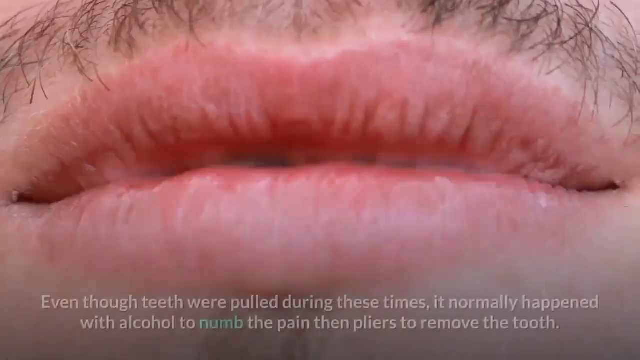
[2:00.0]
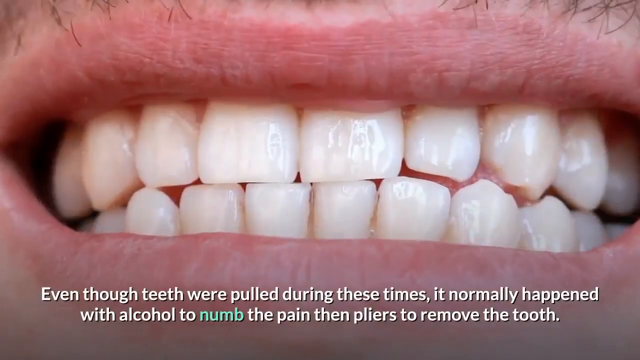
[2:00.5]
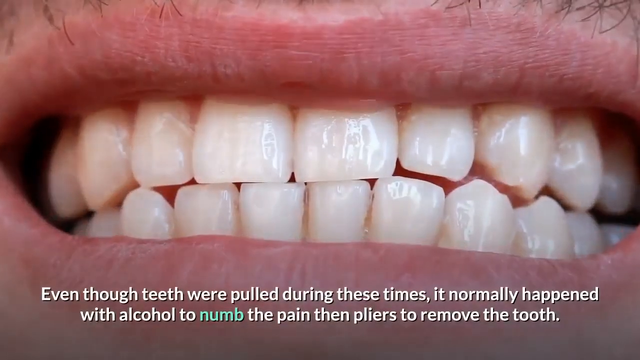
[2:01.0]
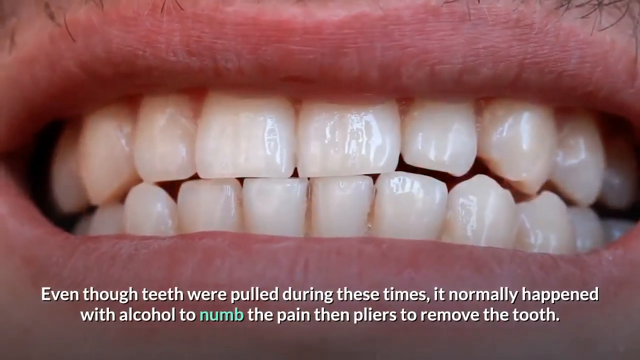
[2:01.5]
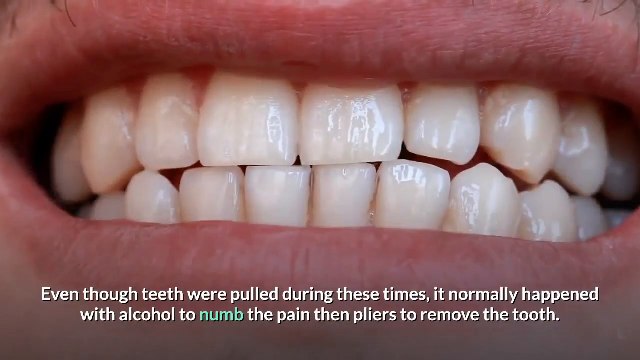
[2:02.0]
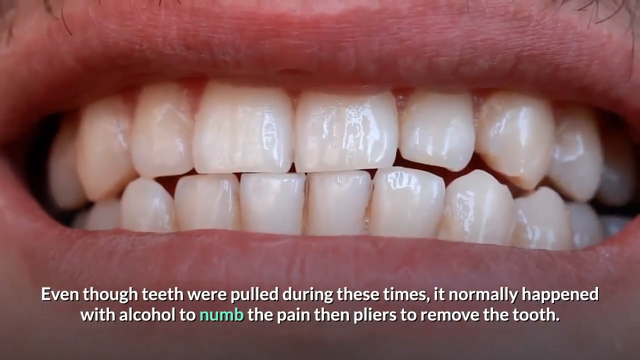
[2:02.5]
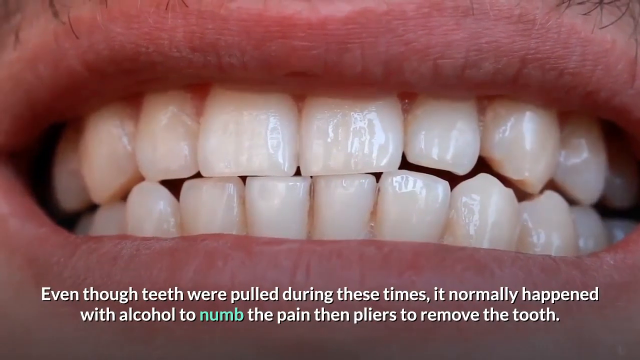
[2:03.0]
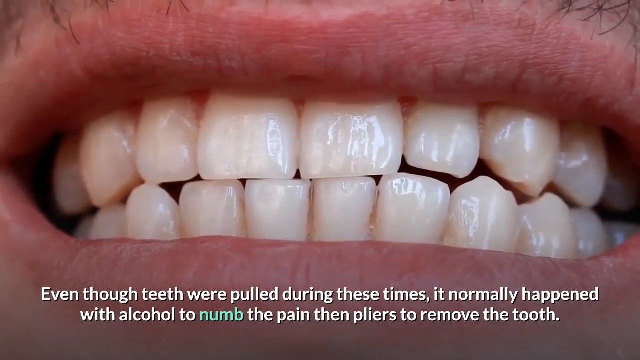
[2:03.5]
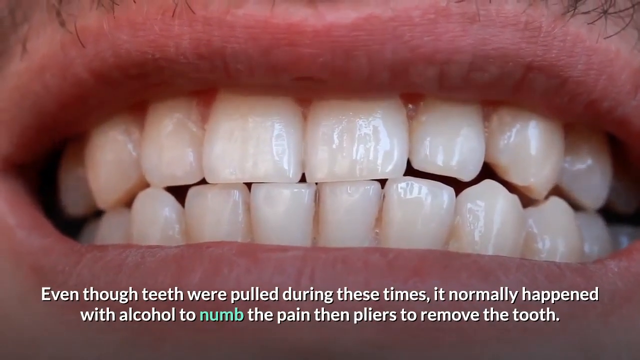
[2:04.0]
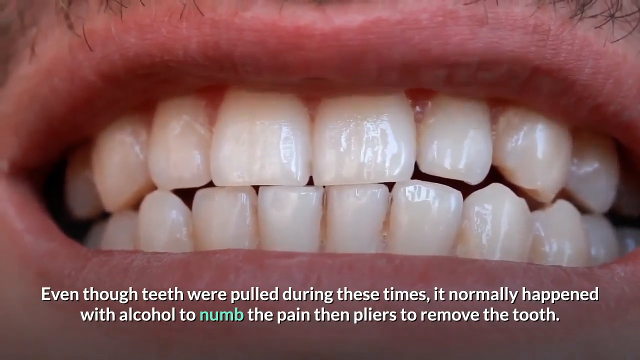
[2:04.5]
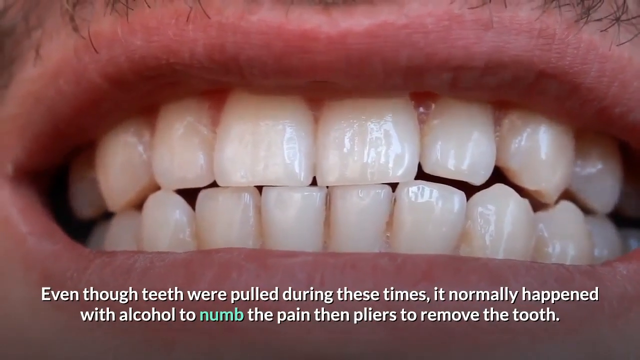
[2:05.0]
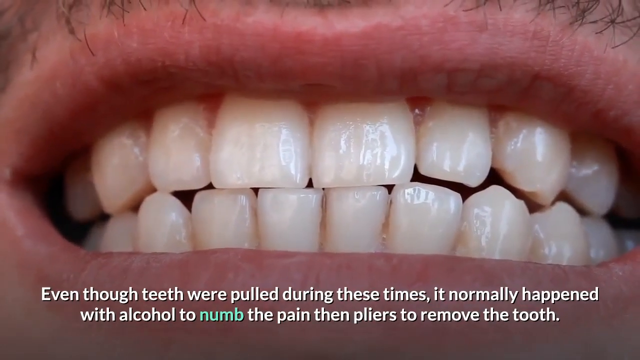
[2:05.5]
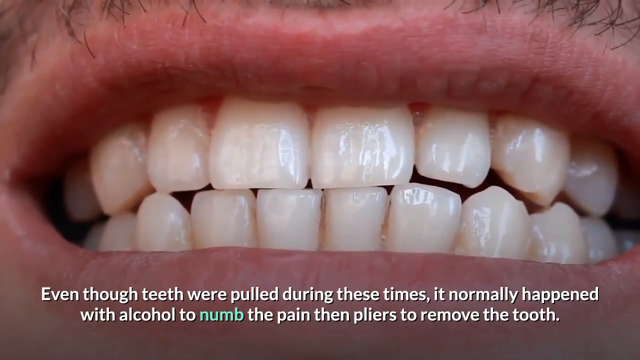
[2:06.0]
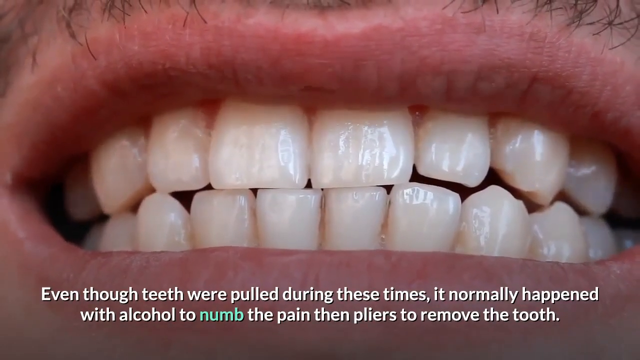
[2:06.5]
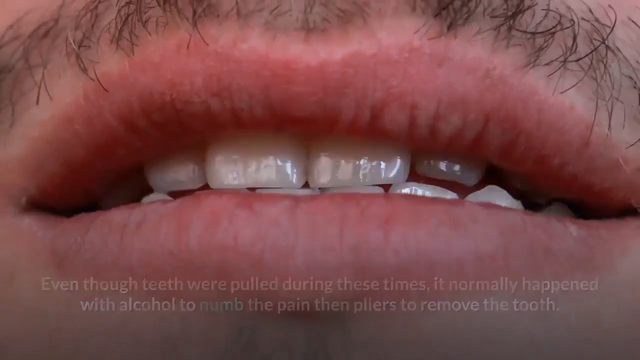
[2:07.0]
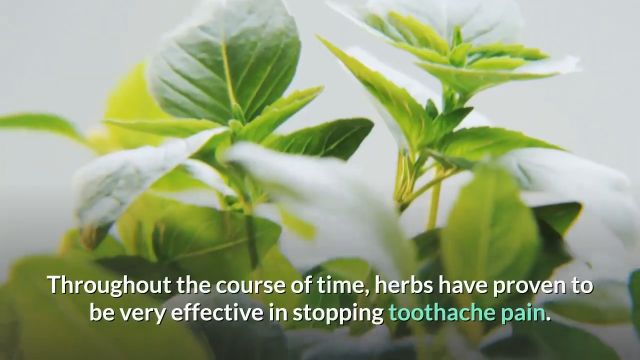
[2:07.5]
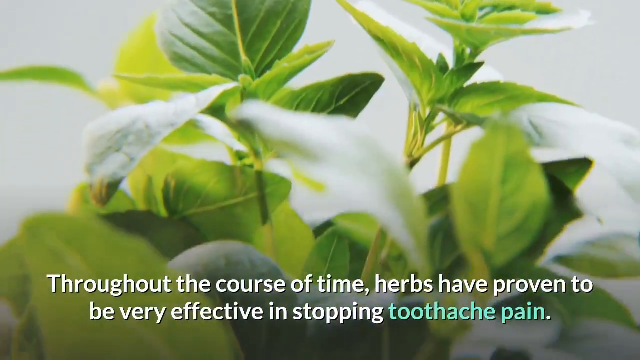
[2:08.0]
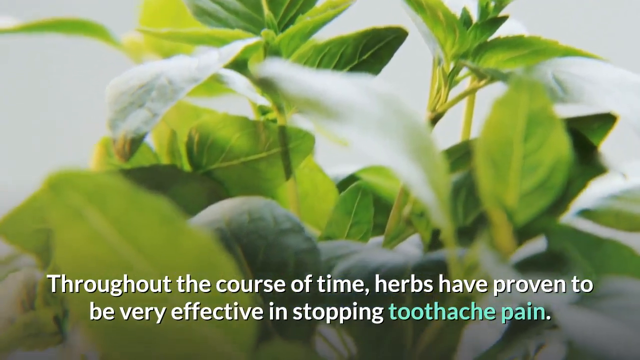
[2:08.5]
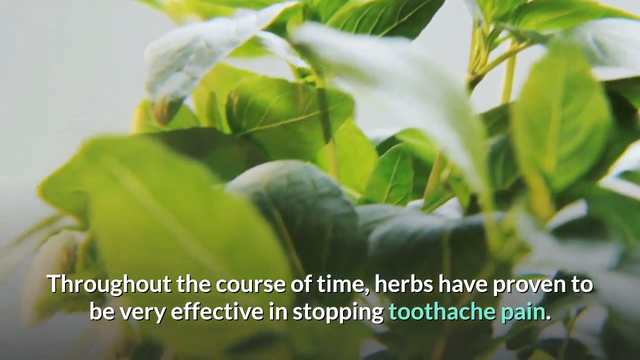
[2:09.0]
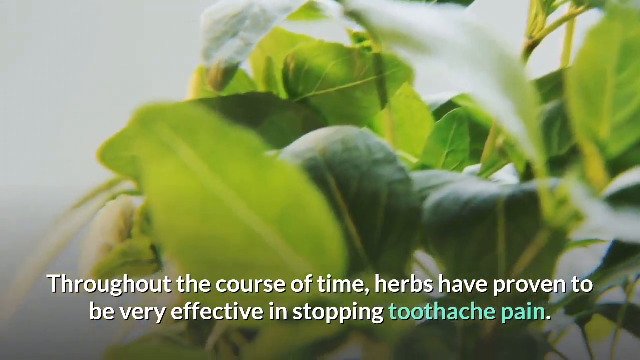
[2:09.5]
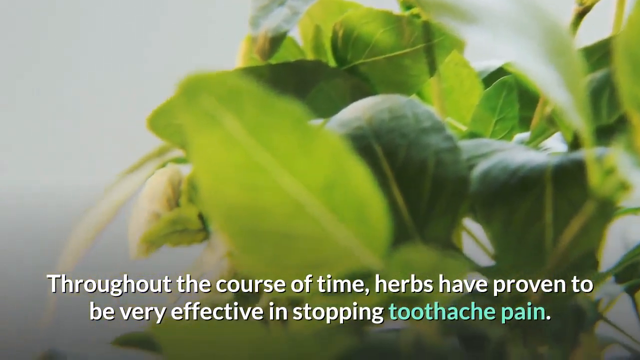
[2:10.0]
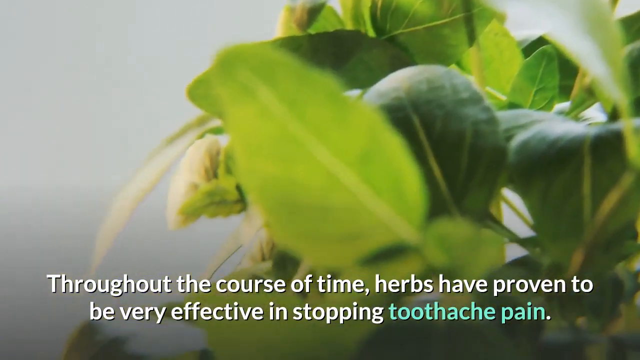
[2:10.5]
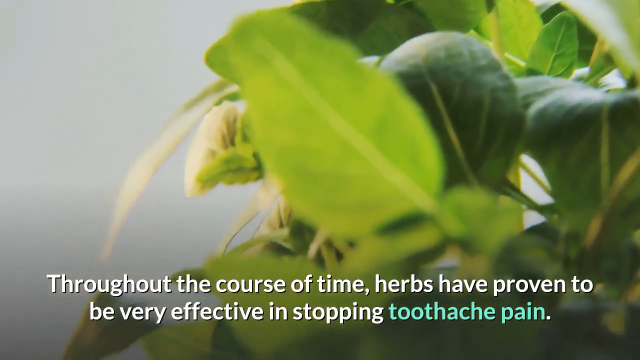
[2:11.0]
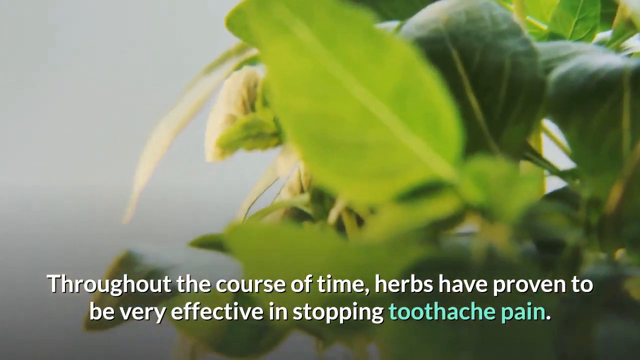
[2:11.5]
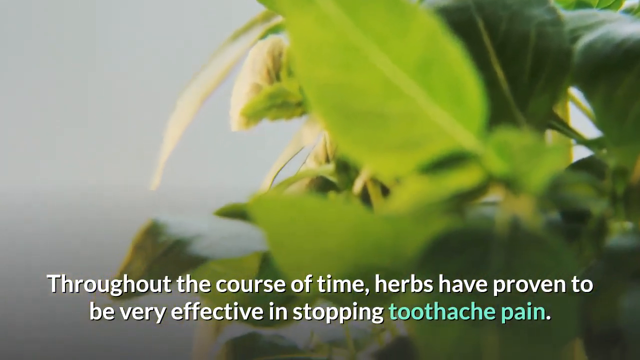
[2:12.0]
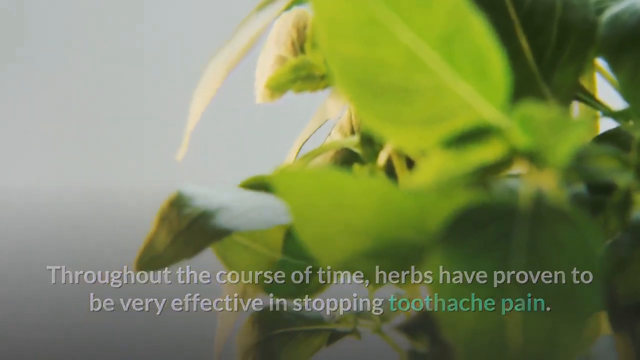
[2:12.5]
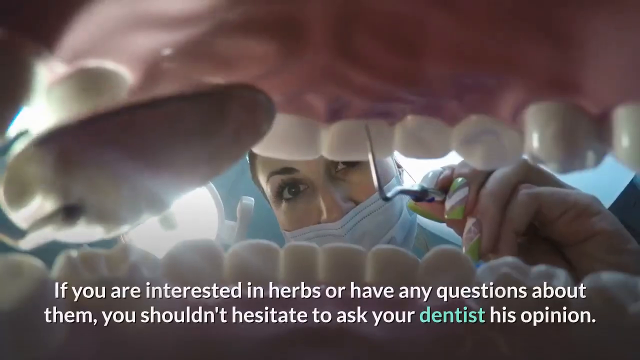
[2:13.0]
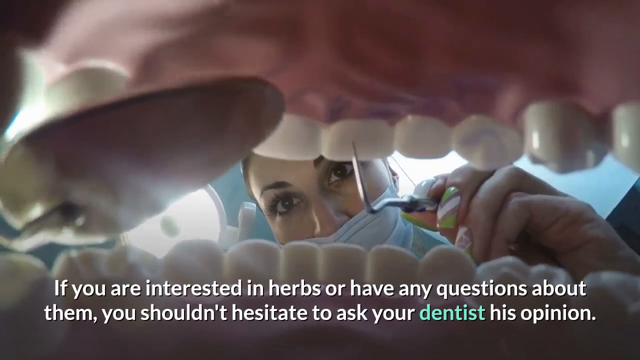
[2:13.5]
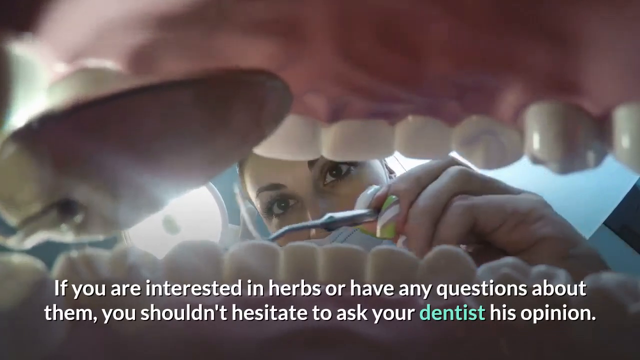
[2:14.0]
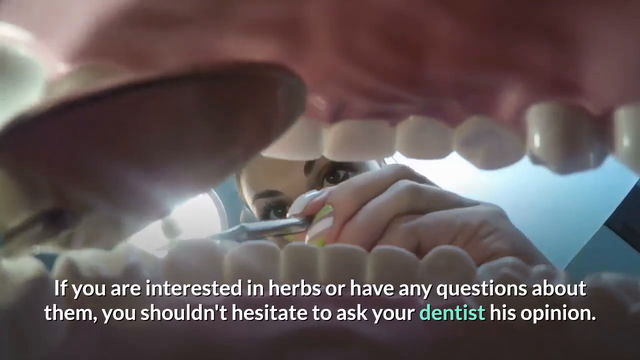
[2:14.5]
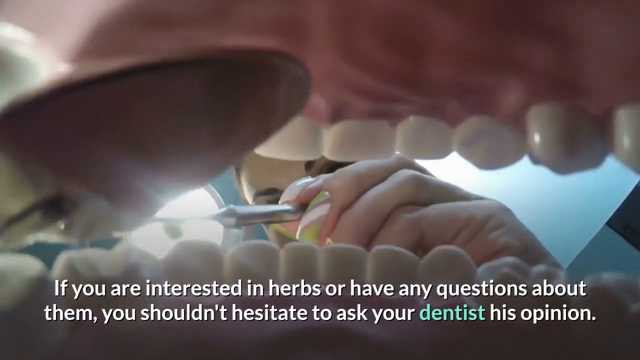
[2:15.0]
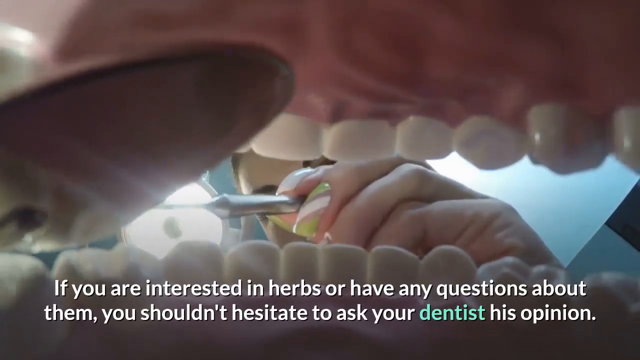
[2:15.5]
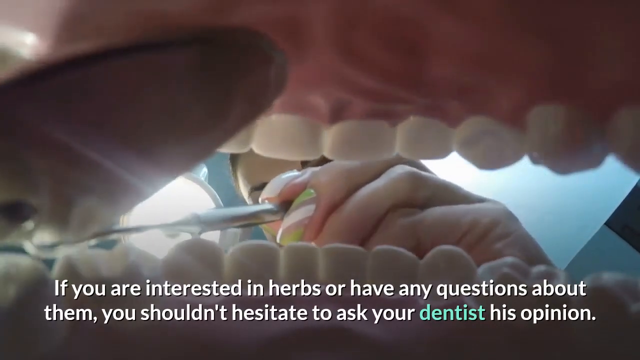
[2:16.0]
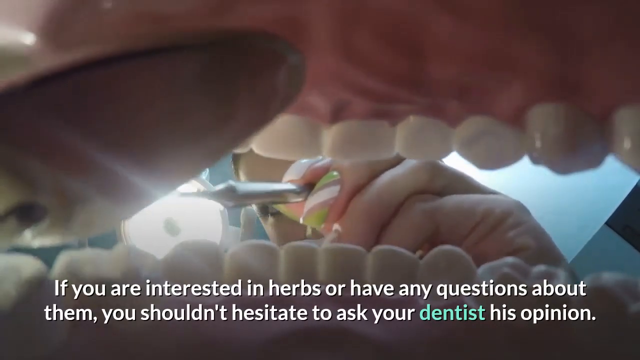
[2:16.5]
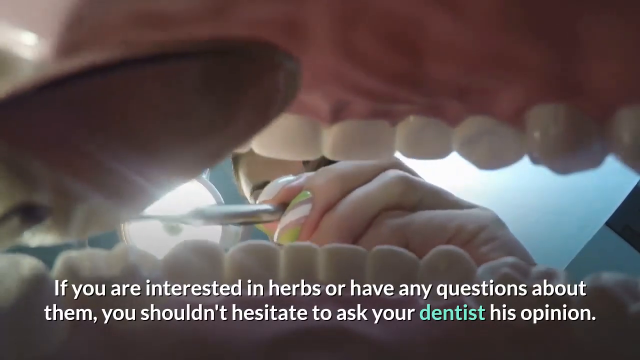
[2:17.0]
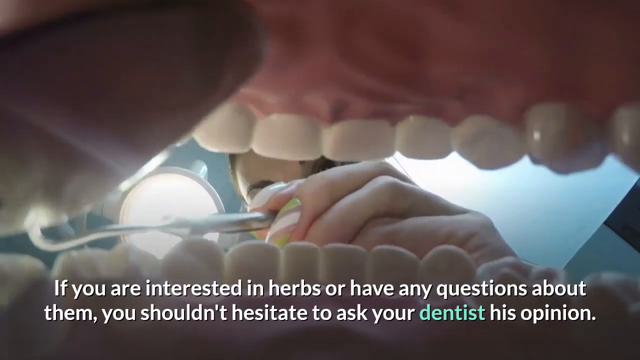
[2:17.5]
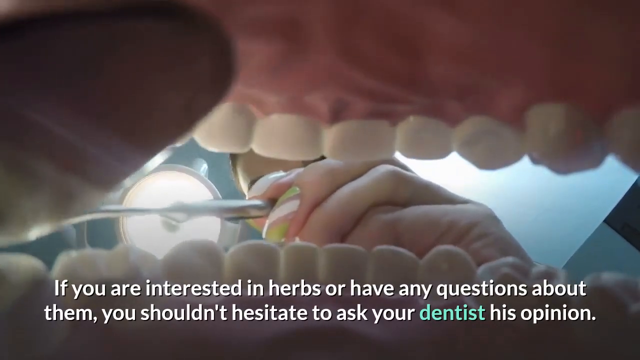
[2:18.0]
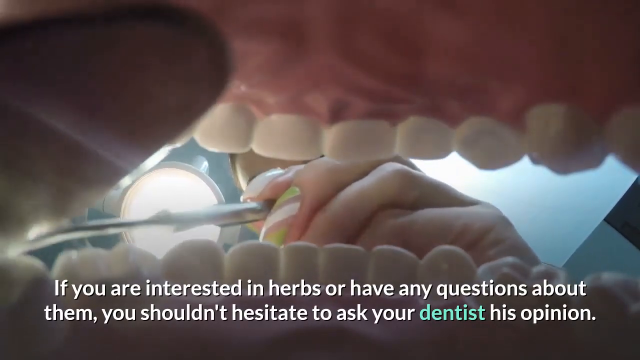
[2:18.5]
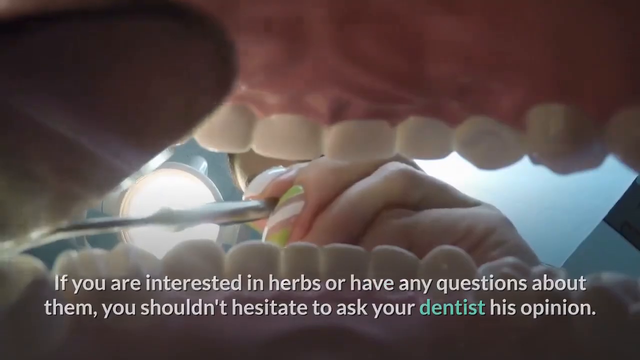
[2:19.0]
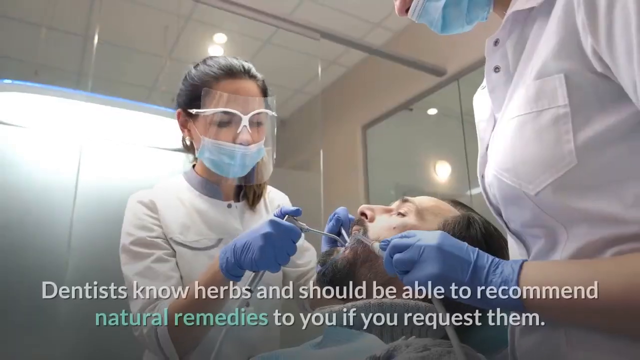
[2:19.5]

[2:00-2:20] The shot is zoomed in on a set of lips with a mustache above them, and the text at the bottom reads "even though teeth were pulled during these times it normally happened with alcohol to numb the pain then pliers to remove the tooth." The lips part to bare a set of nice teeth. Next is a green leafy plant against a blurred background, with the text "throughout the course of time, herbs have proven to be very effective in stopping toothache pain." The camera zooms down the plant, and the scene changes to a view from inside a mouth looking out past the back of the teeth. The mouth is slightly open, and on the left-hand side a dental device is being inserted. On the right-hand side and directly in front is a dentist with dark hair, eyeliner, mascara and a medical mask. In their left hand they hold a dental scraper placed behind the top front tooth; the hand is manicured with green and white nail polish. There is just light to the right side, and a spotlight is visible to the left of the dentist. The text at the bottom reads "if you are interested in herbs or have any questions about them, you shouldn't hesitate to ask your dentist his opinion." The dentist moves the scraper over to where the other dental appliance is.